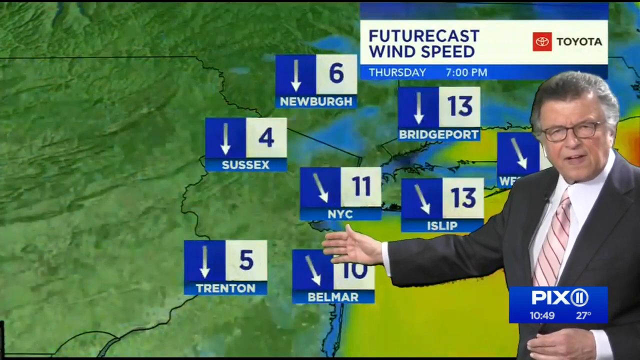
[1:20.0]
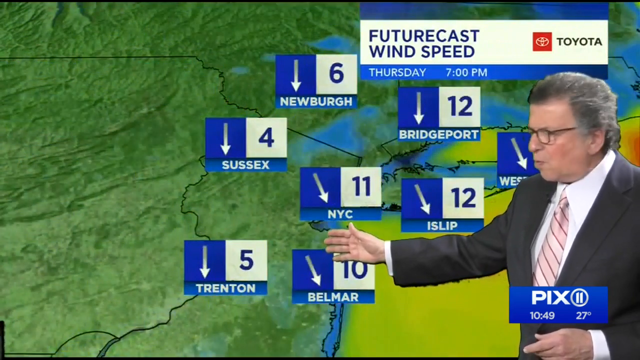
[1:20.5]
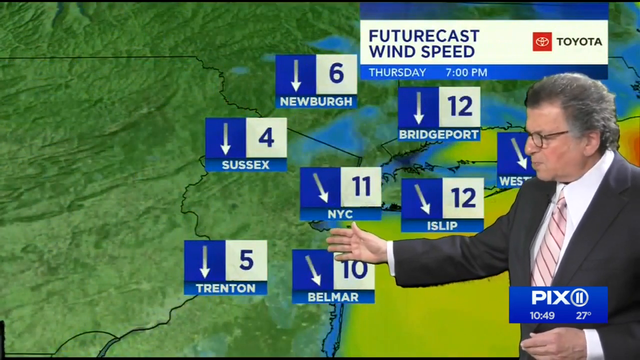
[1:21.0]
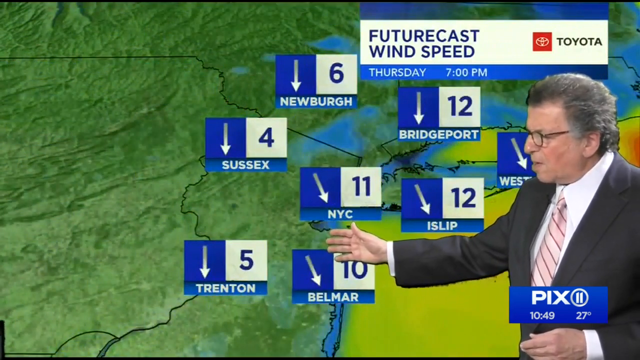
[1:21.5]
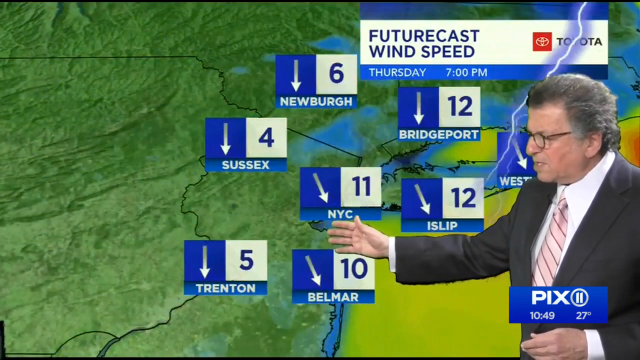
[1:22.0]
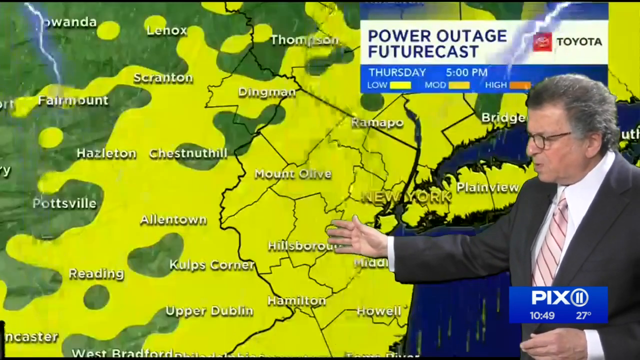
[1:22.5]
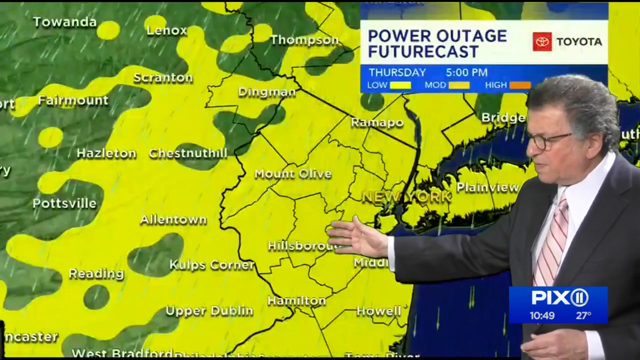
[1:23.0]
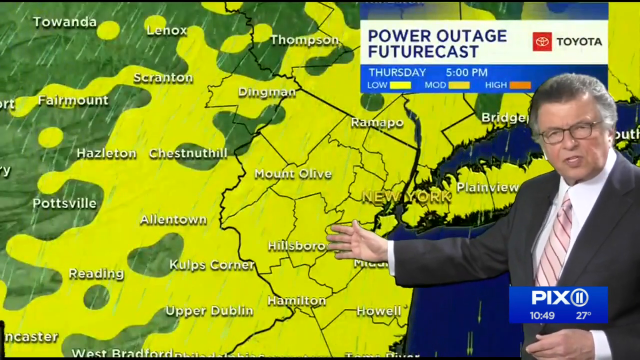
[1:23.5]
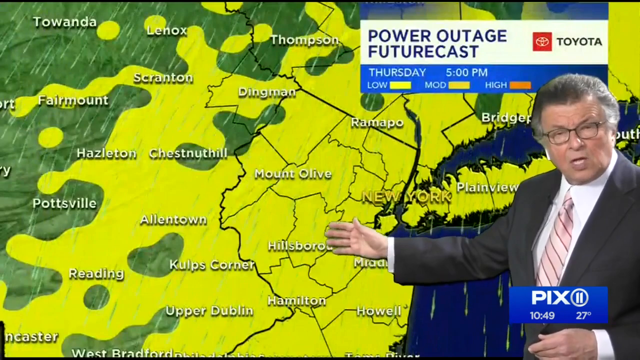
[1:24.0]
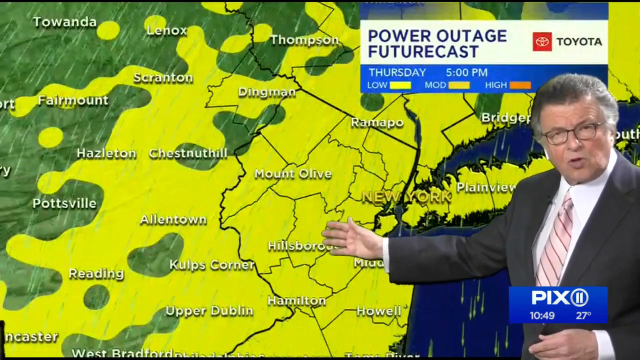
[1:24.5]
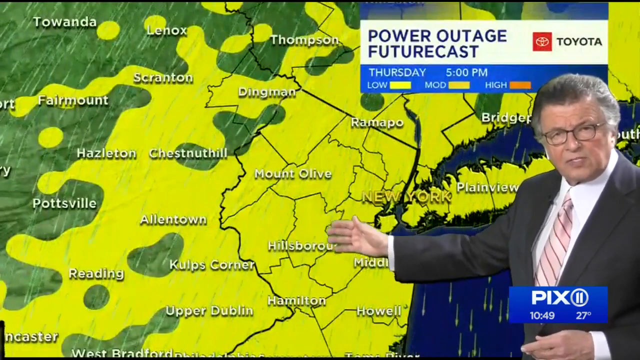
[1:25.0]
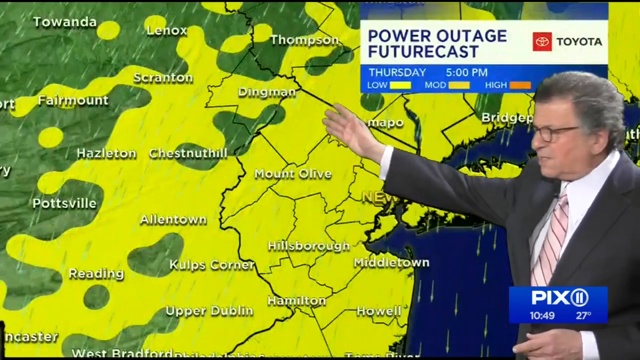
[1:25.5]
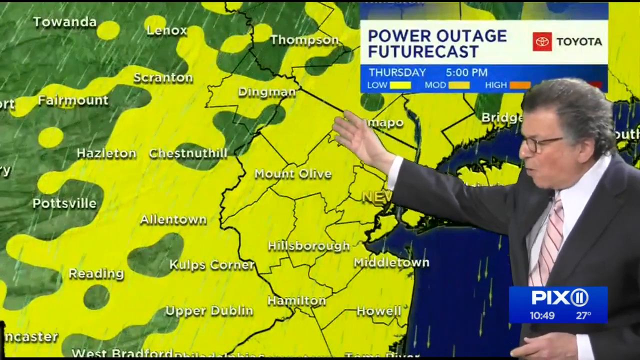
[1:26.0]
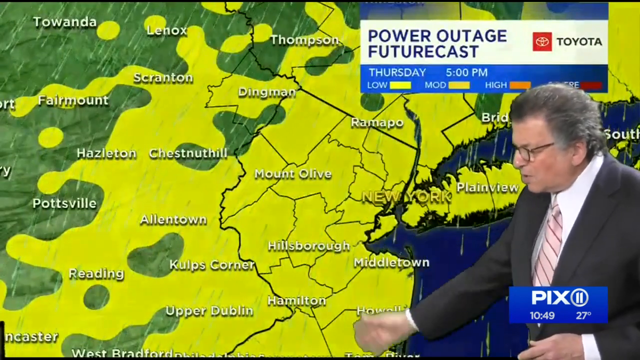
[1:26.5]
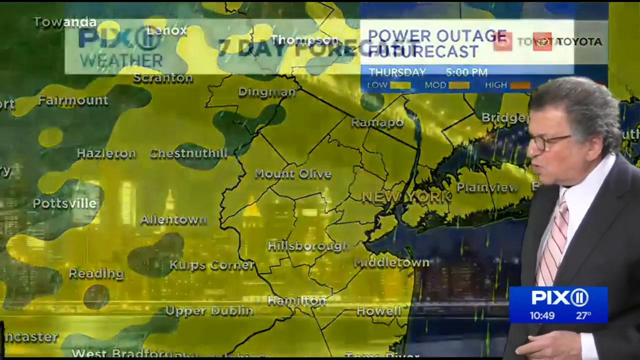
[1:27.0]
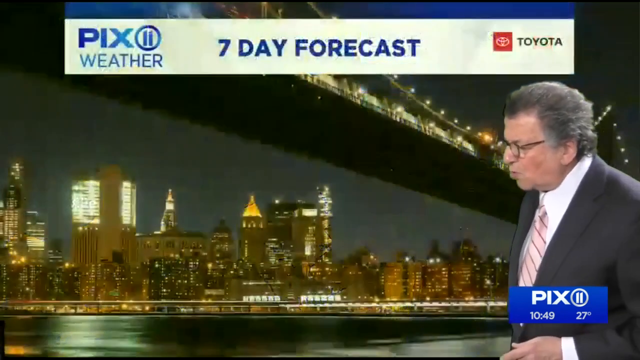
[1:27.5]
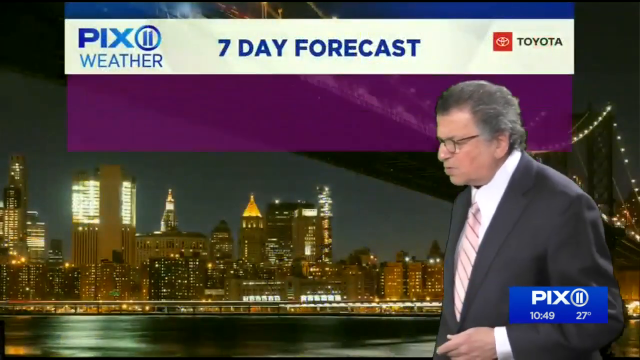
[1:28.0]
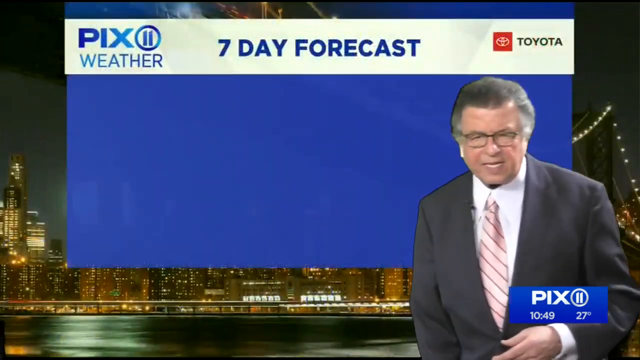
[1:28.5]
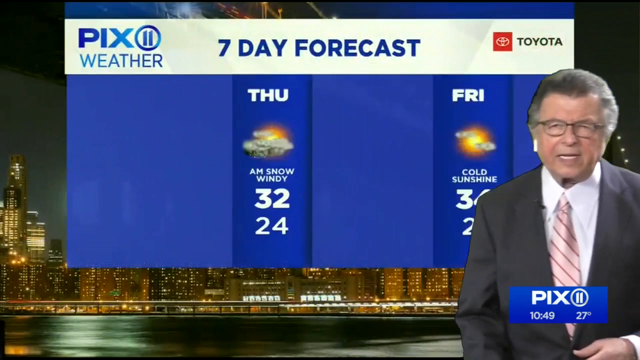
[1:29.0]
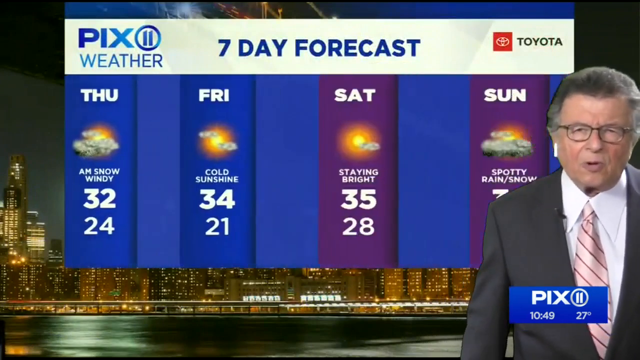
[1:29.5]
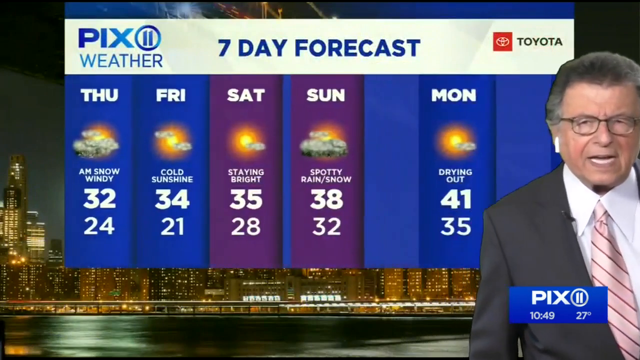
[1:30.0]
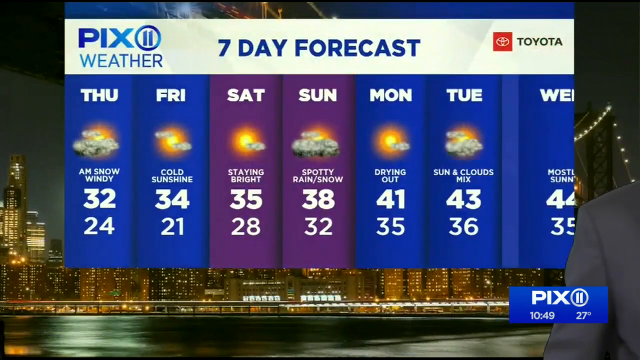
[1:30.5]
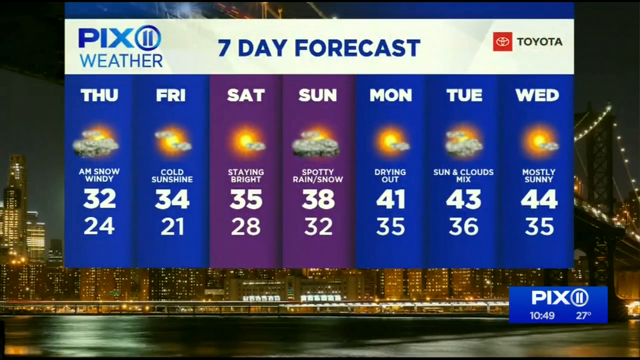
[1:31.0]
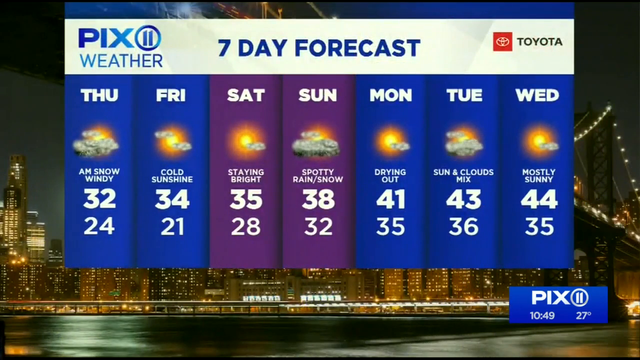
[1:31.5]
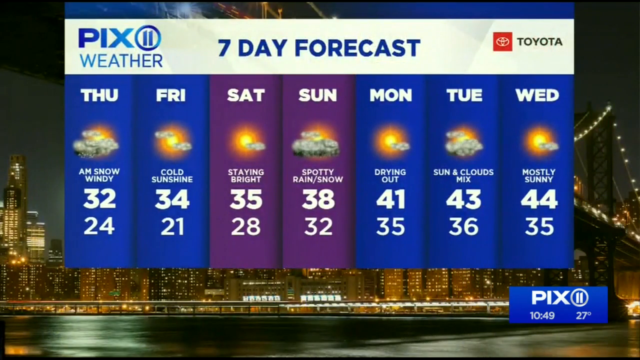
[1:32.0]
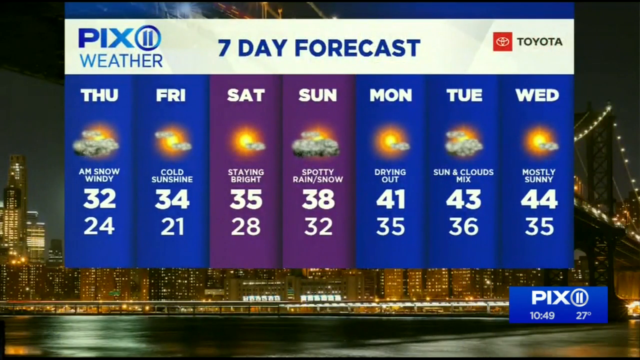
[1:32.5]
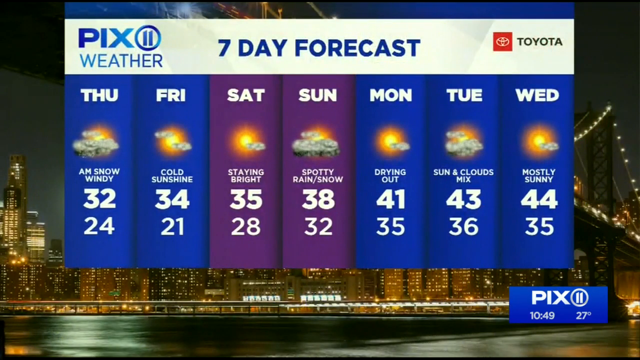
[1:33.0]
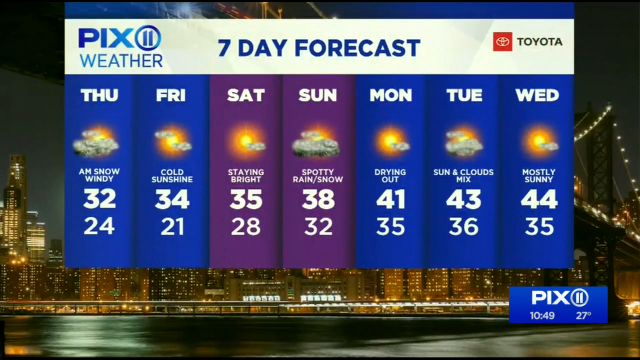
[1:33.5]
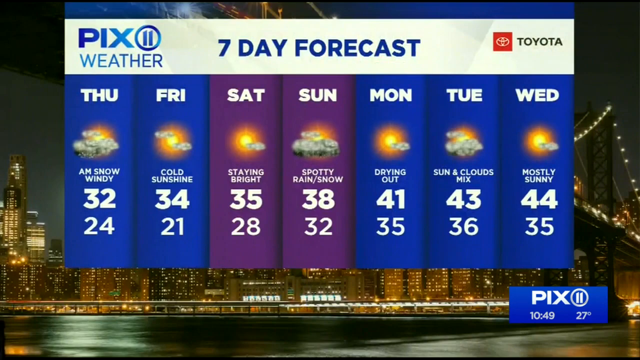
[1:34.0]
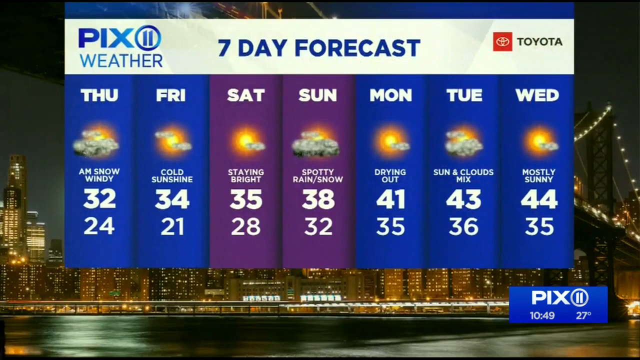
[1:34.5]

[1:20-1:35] The man points more toward New York City. A futurecast shows lightning chances: low across the New York State area, with no place at high risk, and no high chance of power outages. A seven-day forecast for upper New York shows temperatures of 32, 34, 35, 38, 41, 43 and 44, with descriptions for each day such as snowy, windy, cold sunshine, spotty rain and snow, and for Monday, Tuesday and Wednesday drying out, sun and clouds mix, and mostly sunny. PICS Weather is shown sponsoring the weather report.